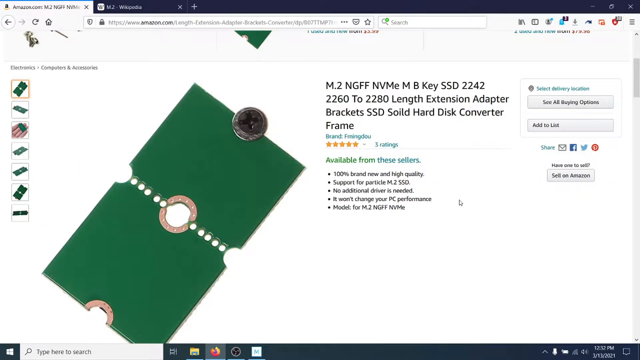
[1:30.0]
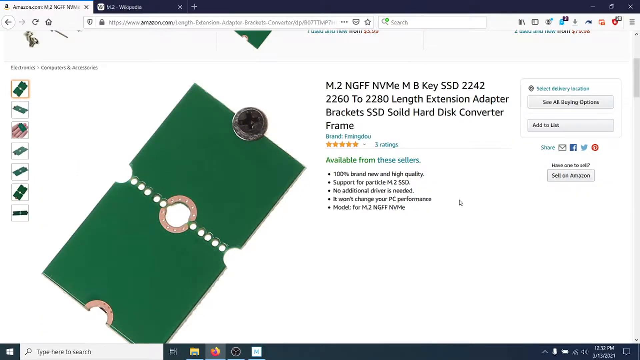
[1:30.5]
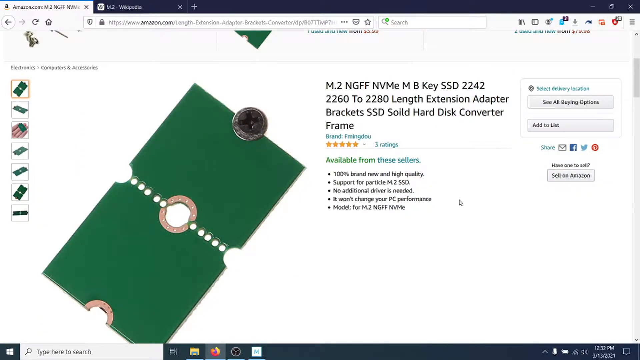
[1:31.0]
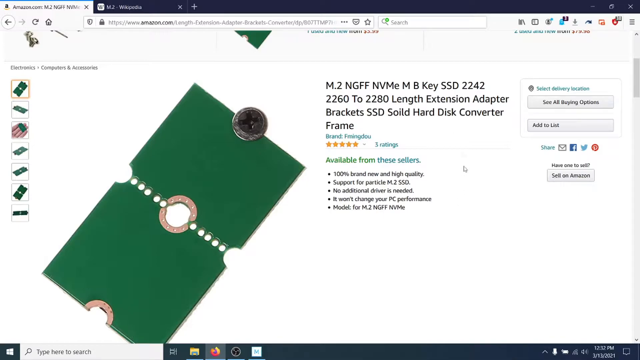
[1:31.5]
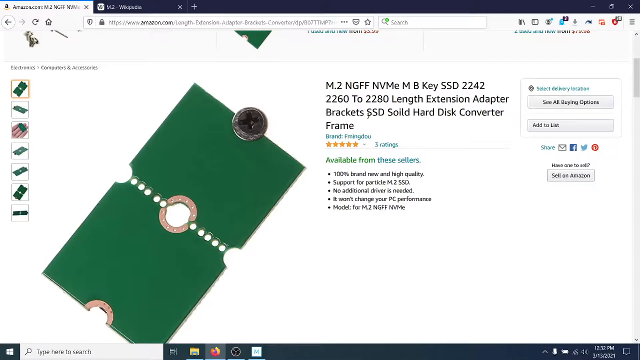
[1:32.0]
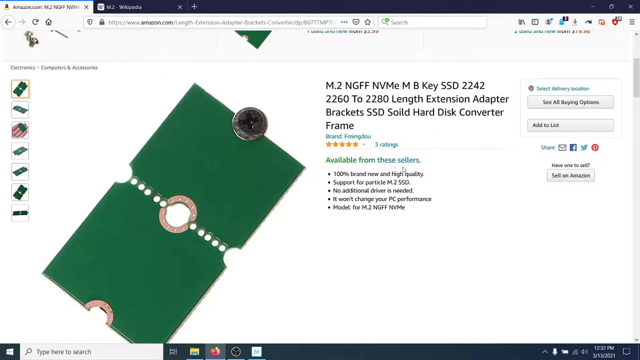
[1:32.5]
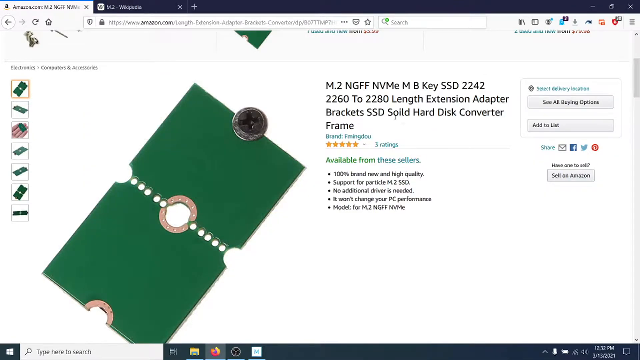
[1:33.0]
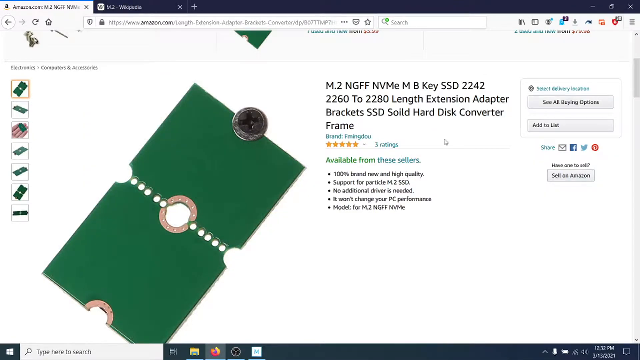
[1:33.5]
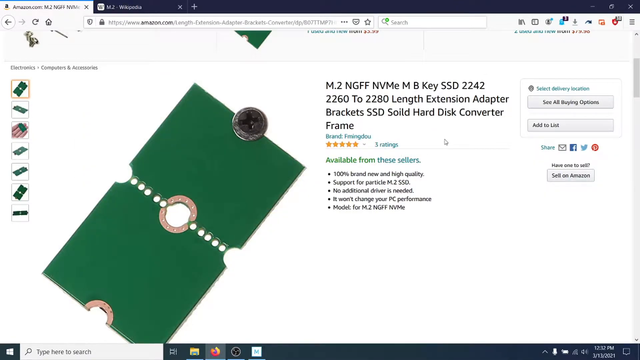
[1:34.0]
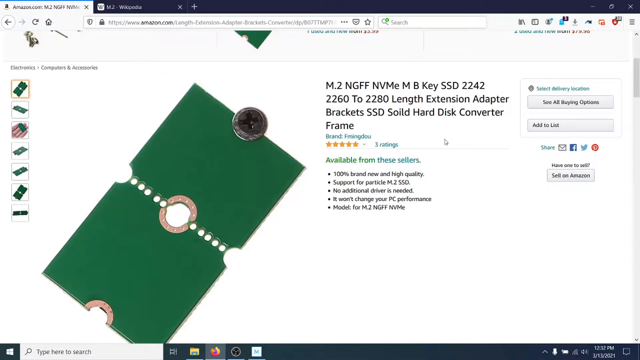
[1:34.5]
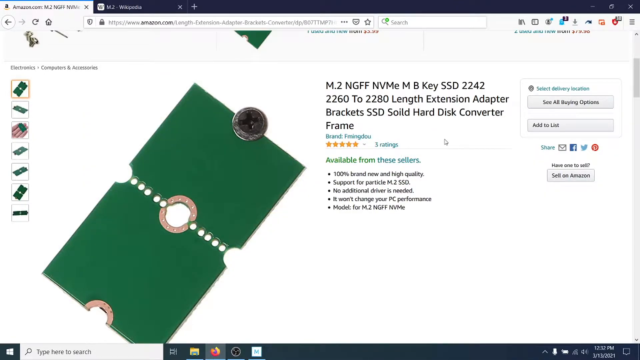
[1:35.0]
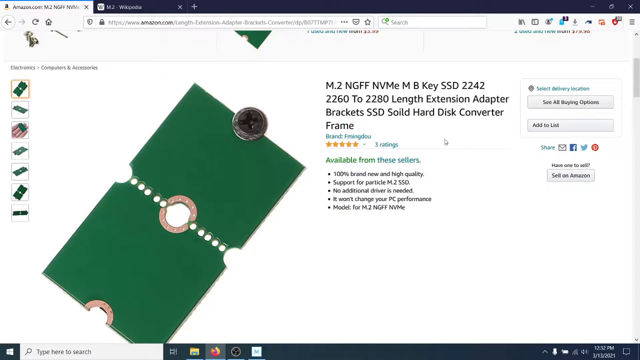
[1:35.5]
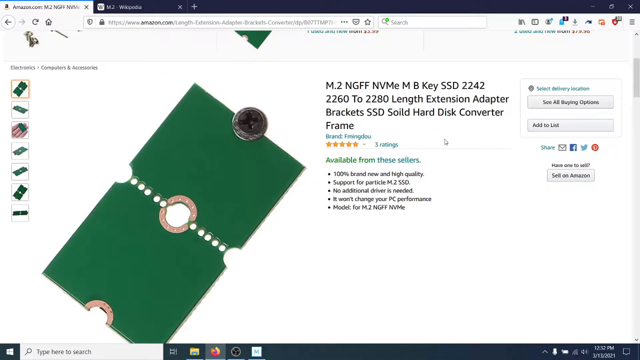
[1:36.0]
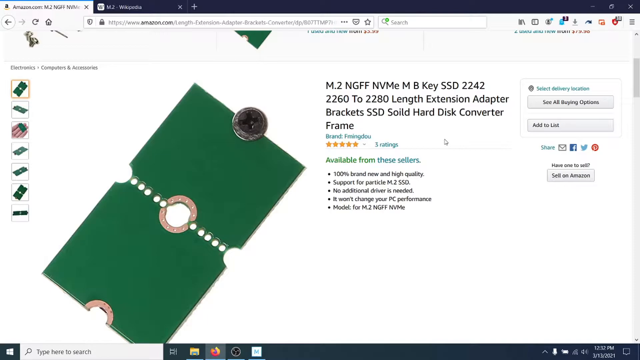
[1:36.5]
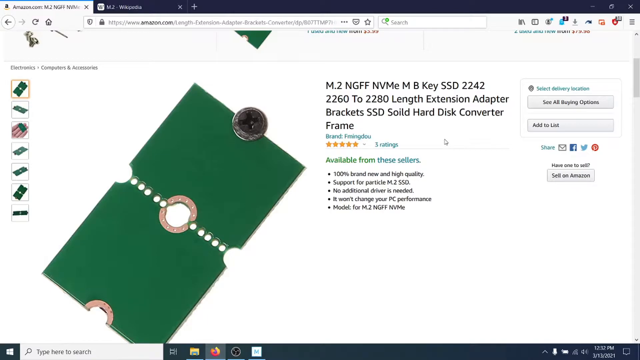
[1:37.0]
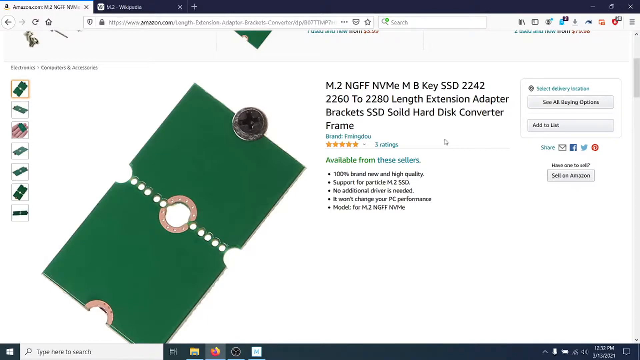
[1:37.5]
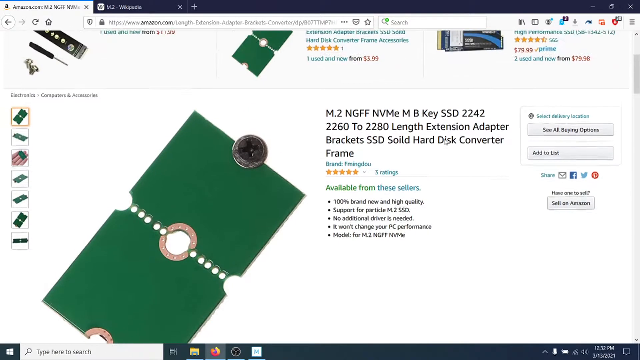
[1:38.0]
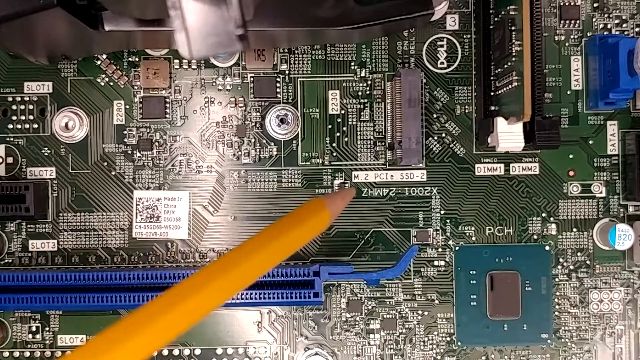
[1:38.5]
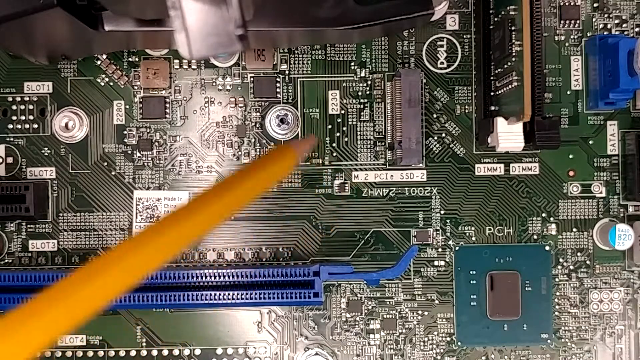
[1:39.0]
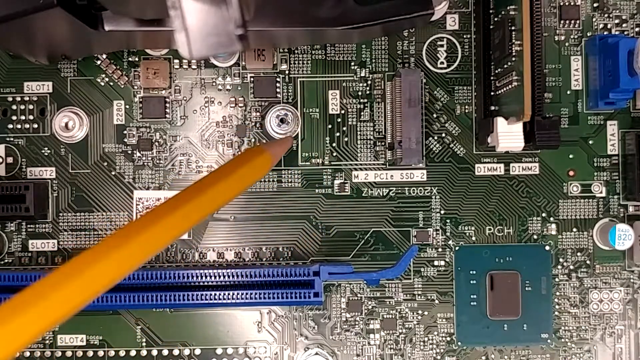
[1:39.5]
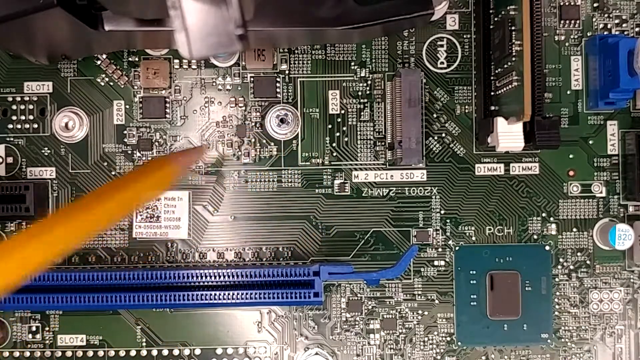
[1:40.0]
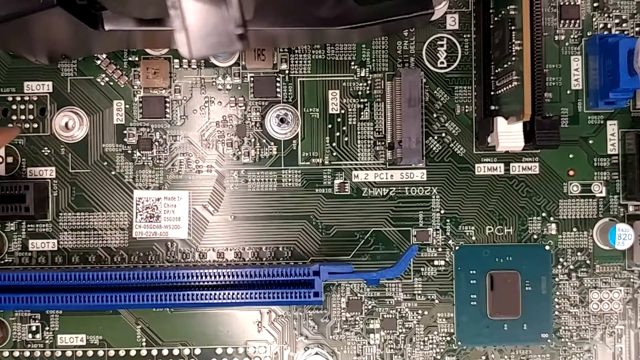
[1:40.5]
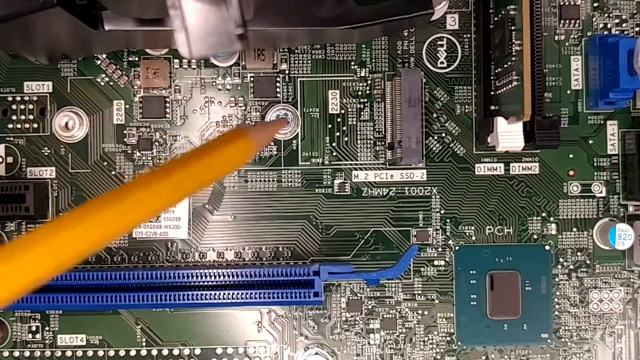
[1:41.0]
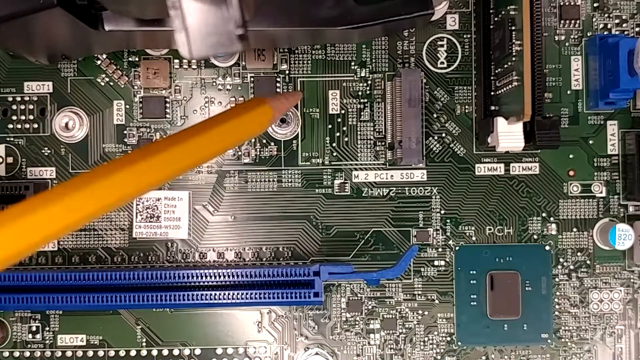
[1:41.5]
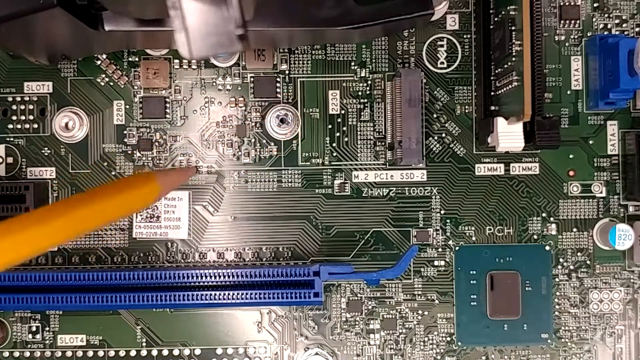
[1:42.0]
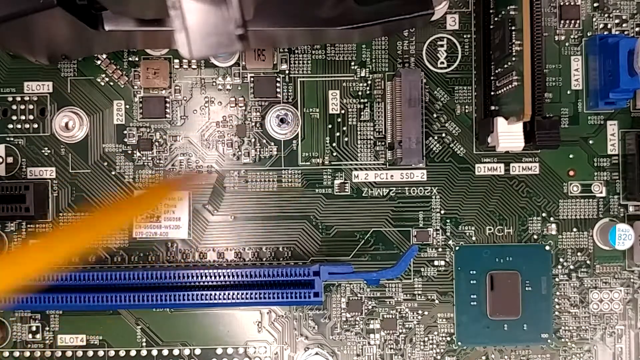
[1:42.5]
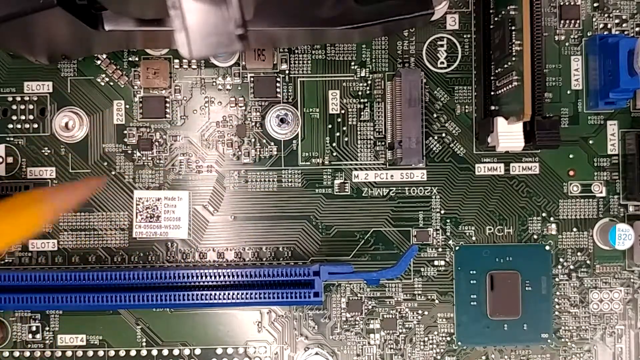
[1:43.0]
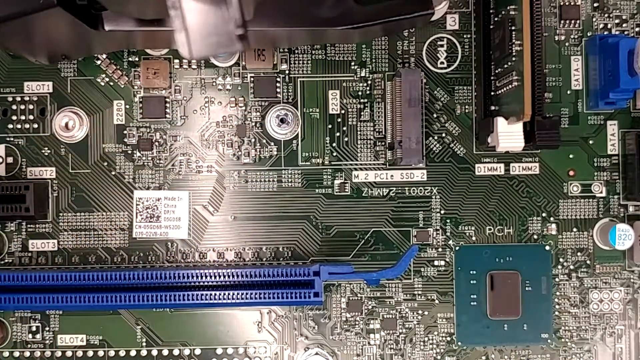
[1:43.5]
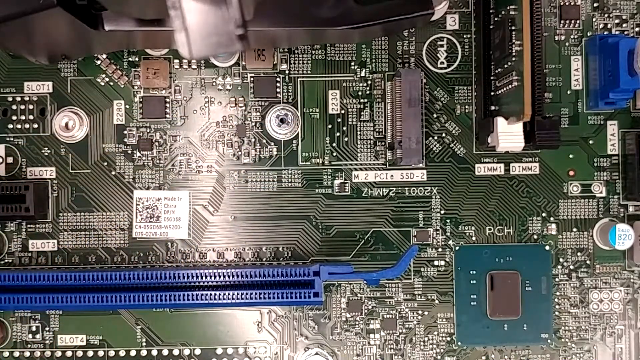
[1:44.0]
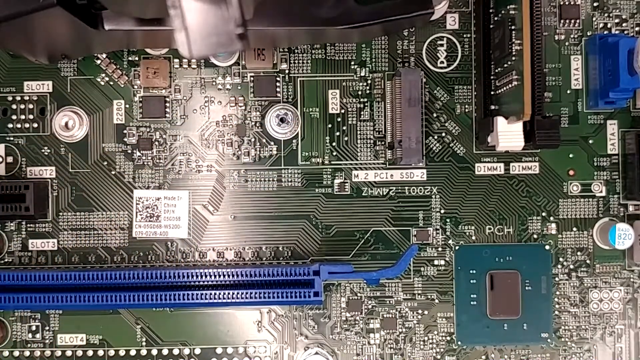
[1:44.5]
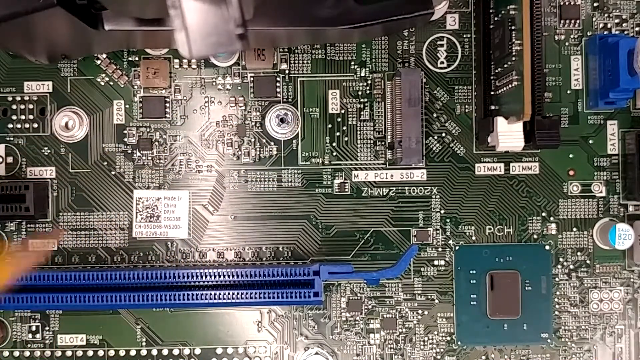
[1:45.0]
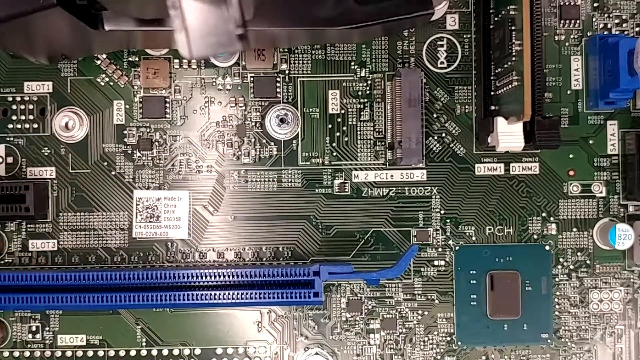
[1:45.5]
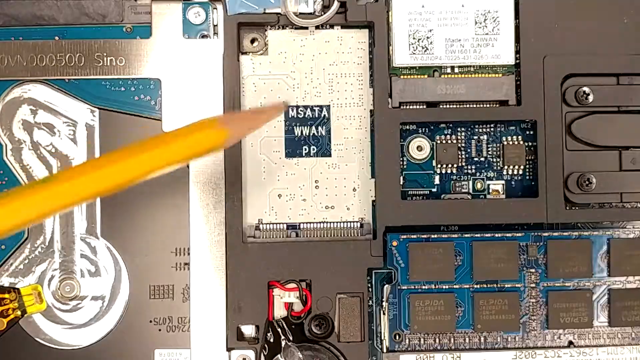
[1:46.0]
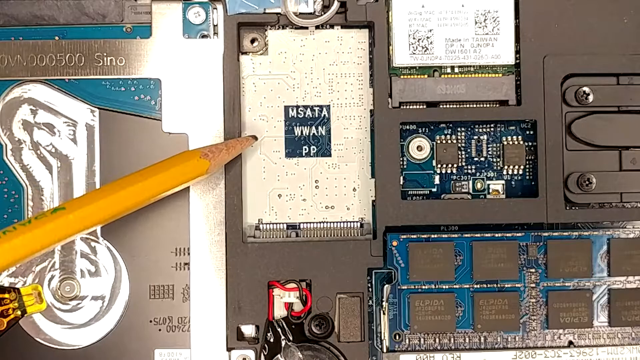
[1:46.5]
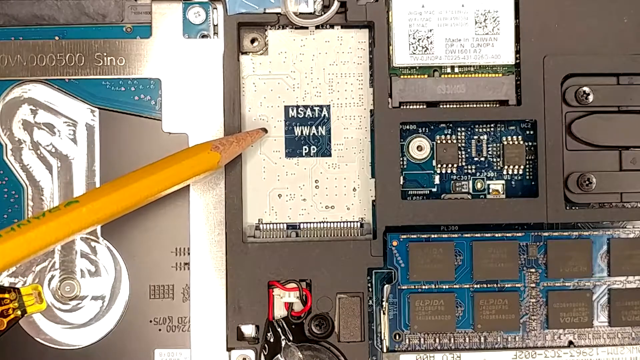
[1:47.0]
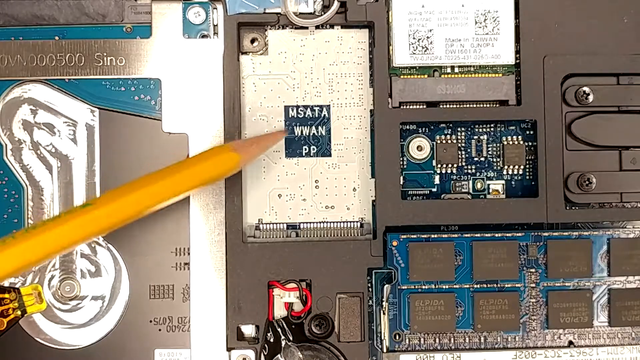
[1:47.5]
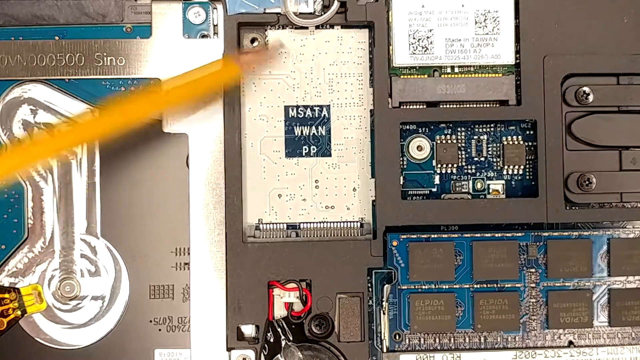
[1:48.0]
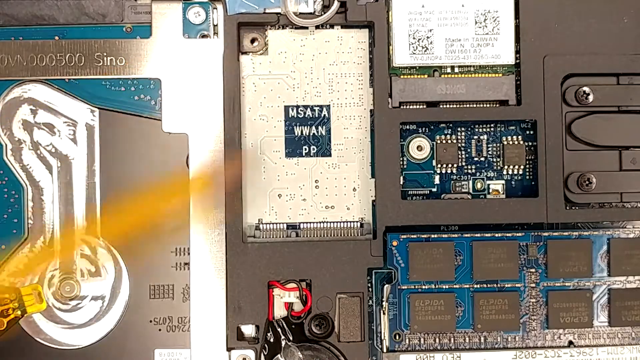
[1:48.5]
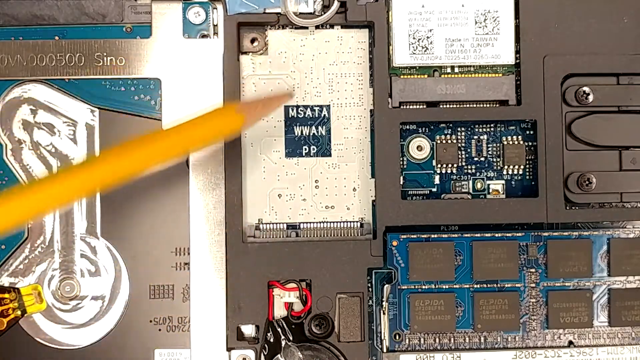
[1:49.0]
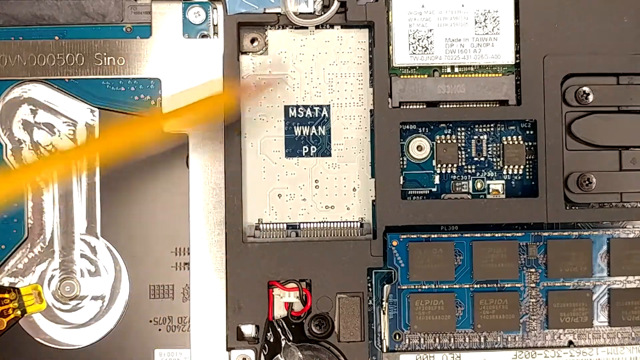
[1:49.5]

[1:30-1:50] A different screen appears, looking like an Amazon checkout for a business. "Amazon" can be made out in the tab in the upper left corner, with a back arrow underneath. The page has pictures of what seems to be a disc converter, with many thumbnails that can be expanded; the first one is highlighted, its perimeter lit up. The image shows a green, roughly rectangular pouch with a circle in the middle and smaller circles going toward the outsides, and what seems to be a black object, possibly a screw, on the upper end. The title reads "M.2 NGFF NVME MBKSSD2242" and continues. The product has five stars from three ratings, and the page reads "available from the sellers", followed by bulleted information about the quality.